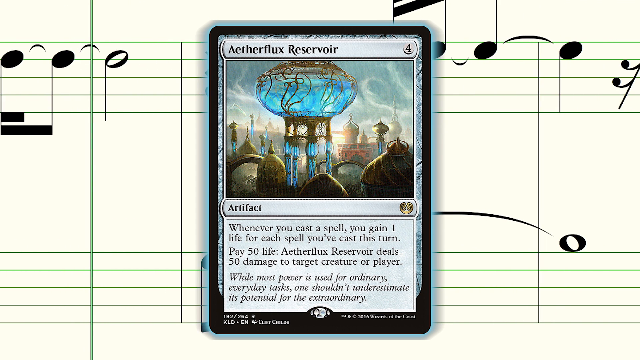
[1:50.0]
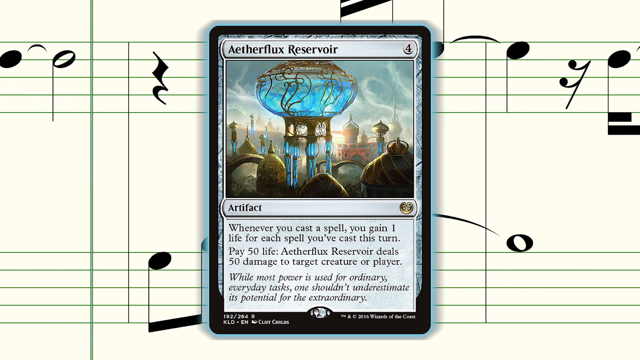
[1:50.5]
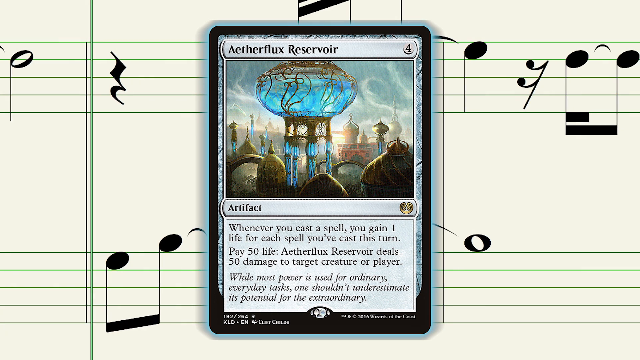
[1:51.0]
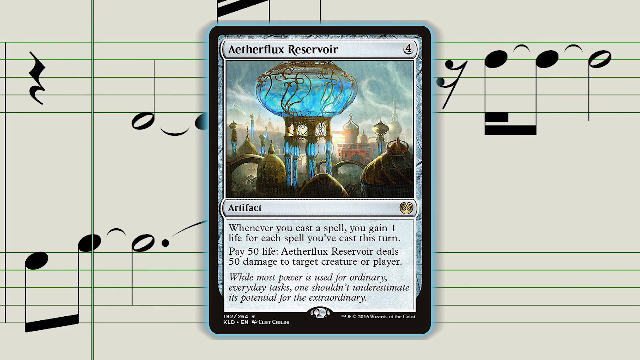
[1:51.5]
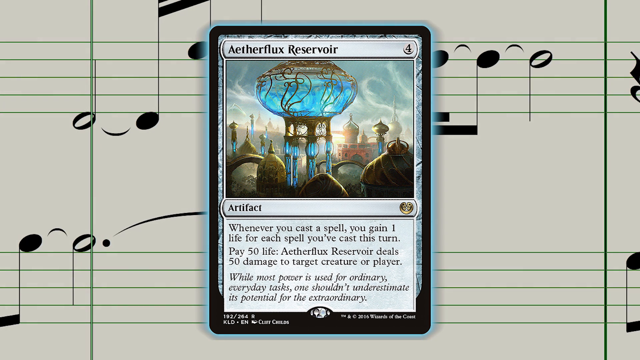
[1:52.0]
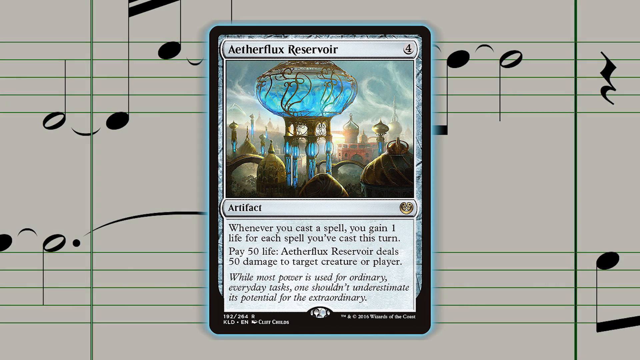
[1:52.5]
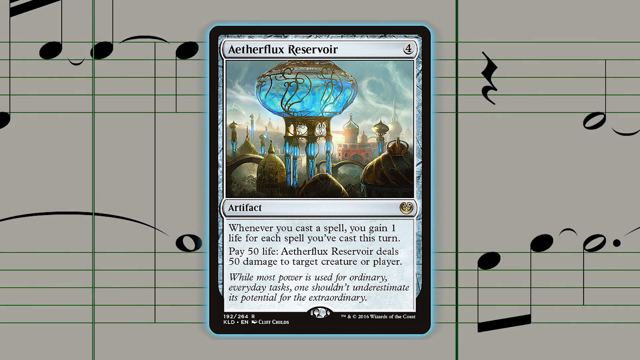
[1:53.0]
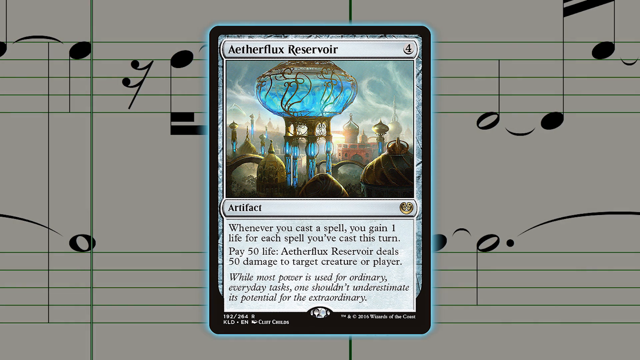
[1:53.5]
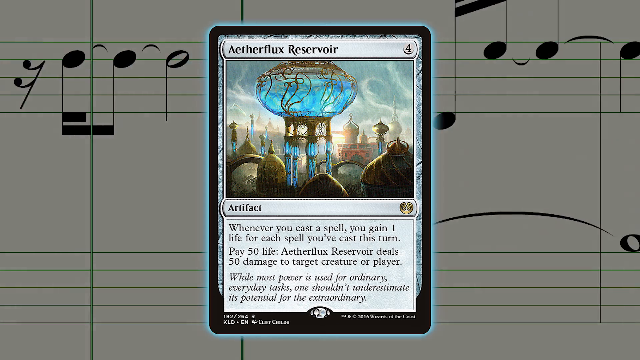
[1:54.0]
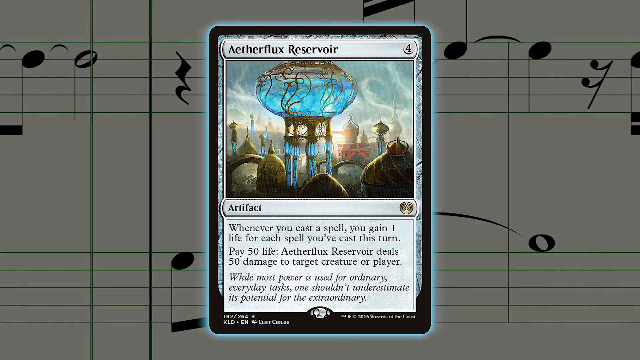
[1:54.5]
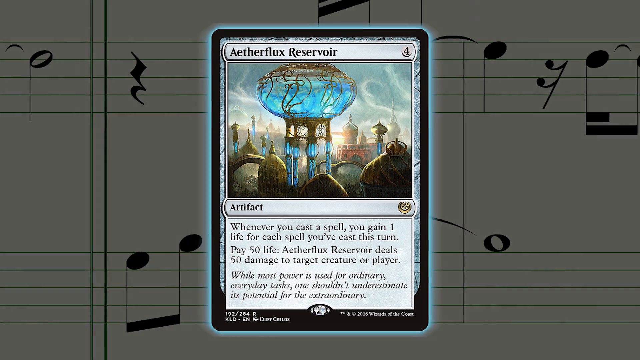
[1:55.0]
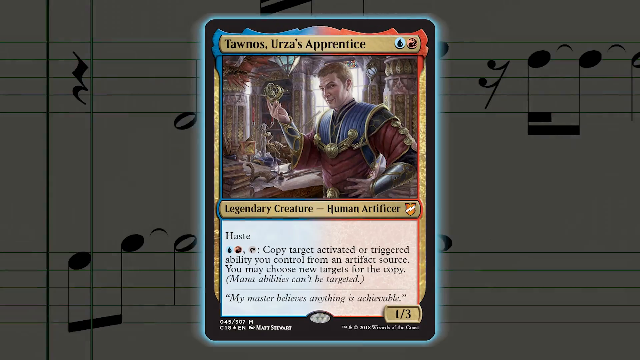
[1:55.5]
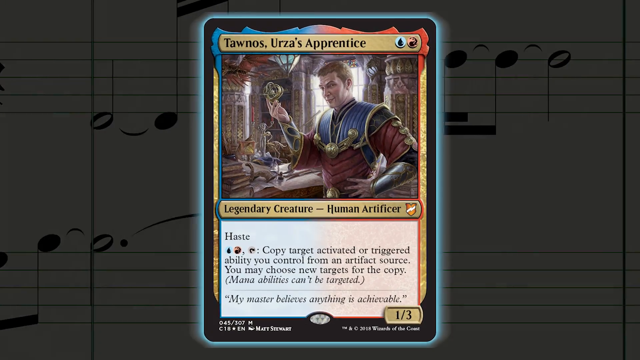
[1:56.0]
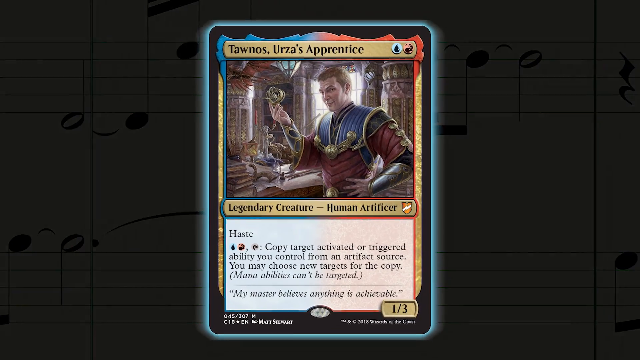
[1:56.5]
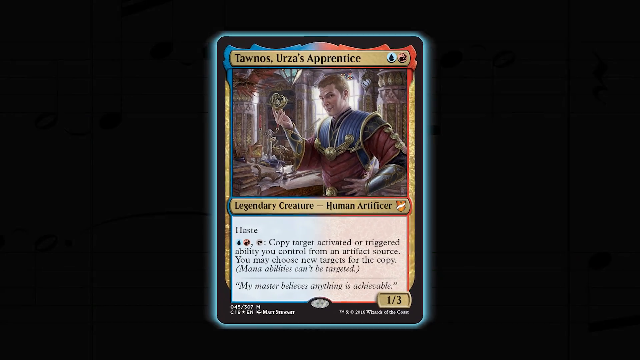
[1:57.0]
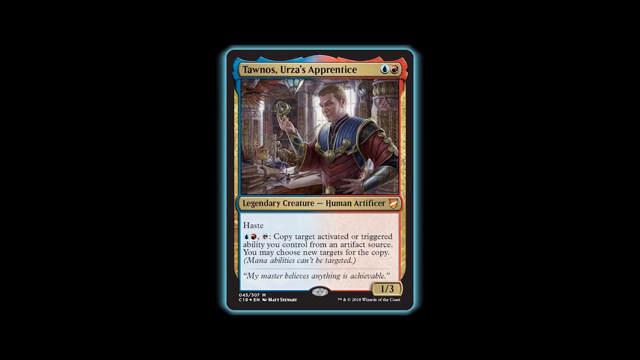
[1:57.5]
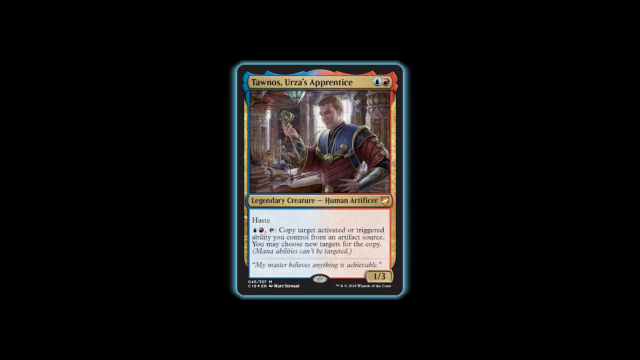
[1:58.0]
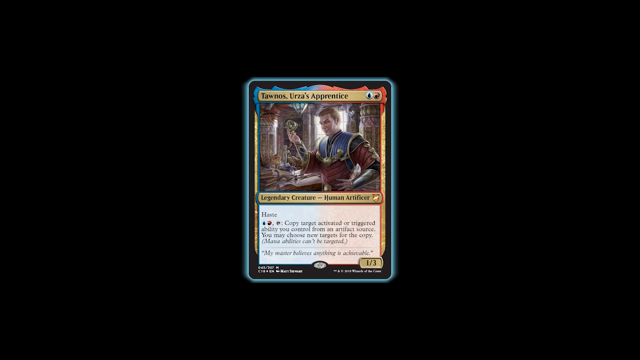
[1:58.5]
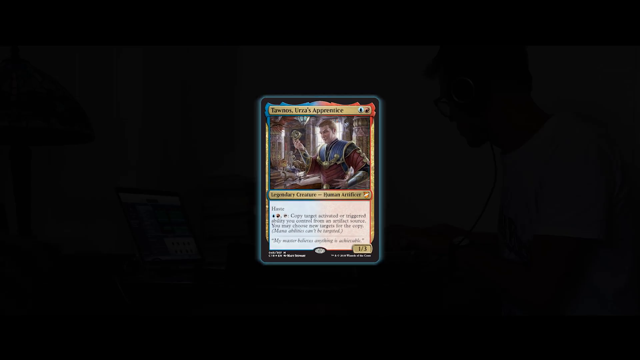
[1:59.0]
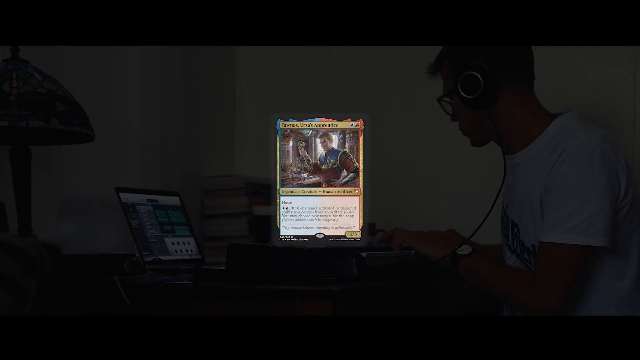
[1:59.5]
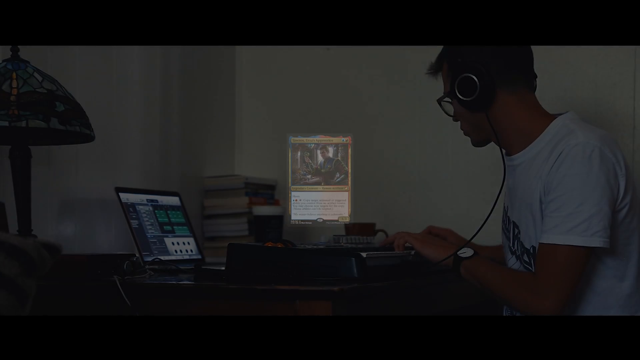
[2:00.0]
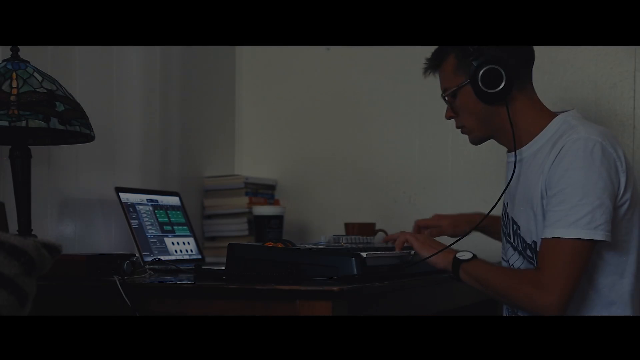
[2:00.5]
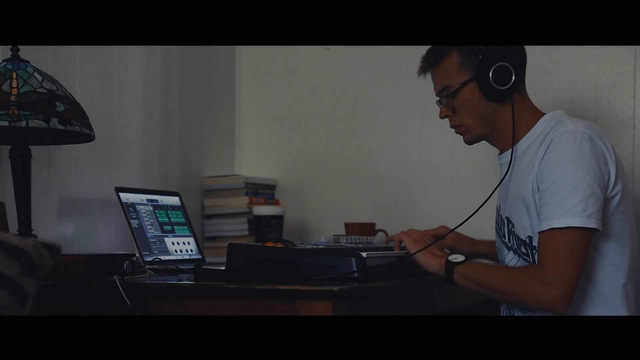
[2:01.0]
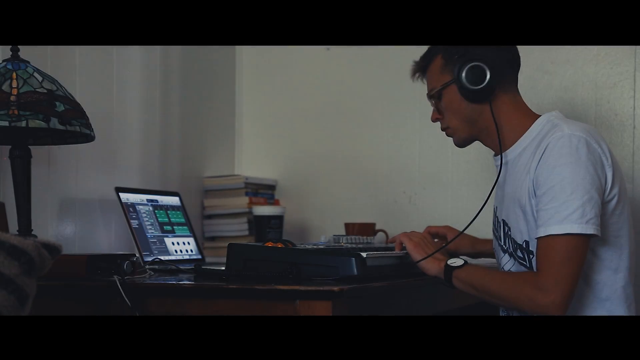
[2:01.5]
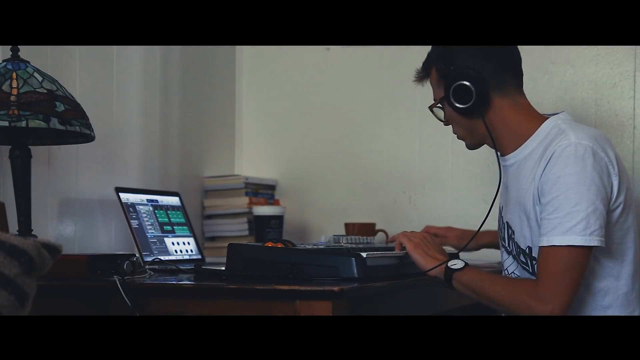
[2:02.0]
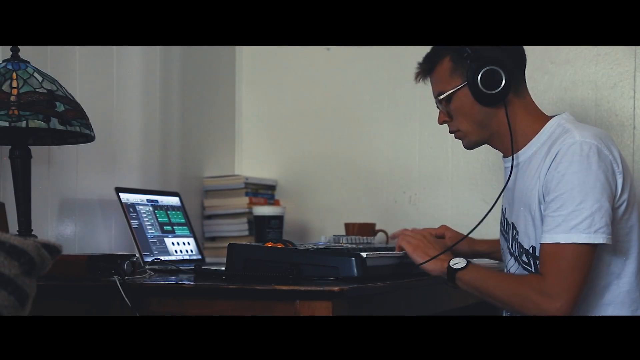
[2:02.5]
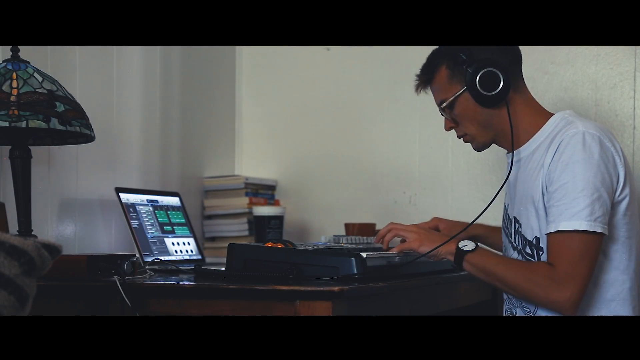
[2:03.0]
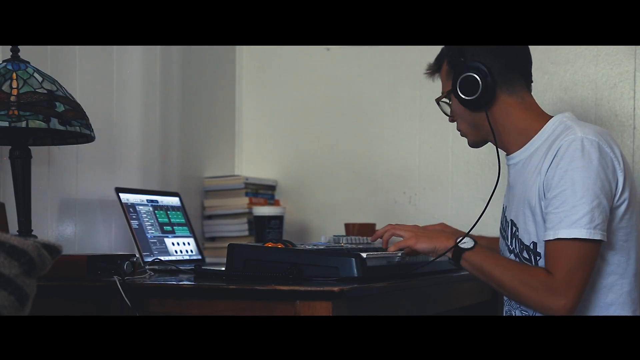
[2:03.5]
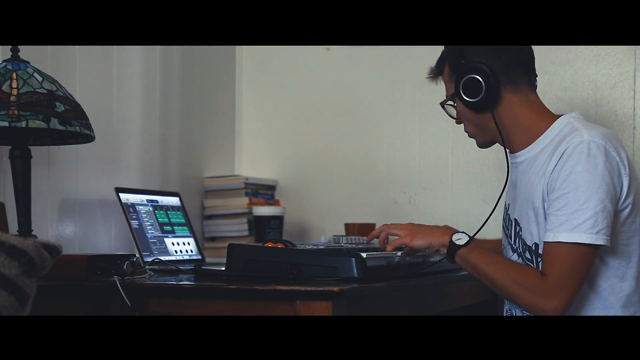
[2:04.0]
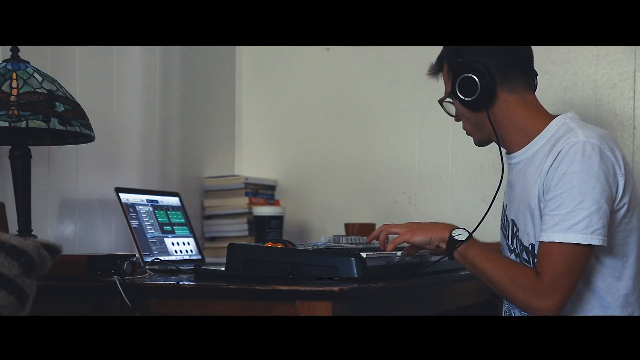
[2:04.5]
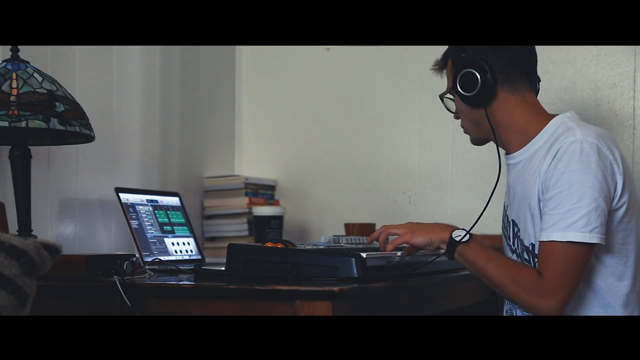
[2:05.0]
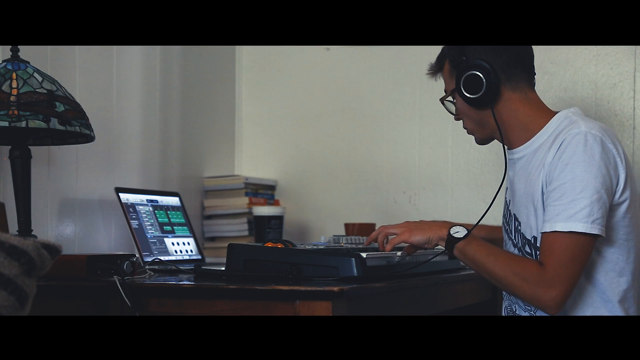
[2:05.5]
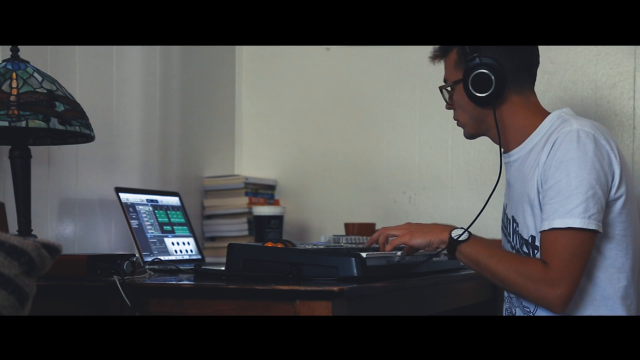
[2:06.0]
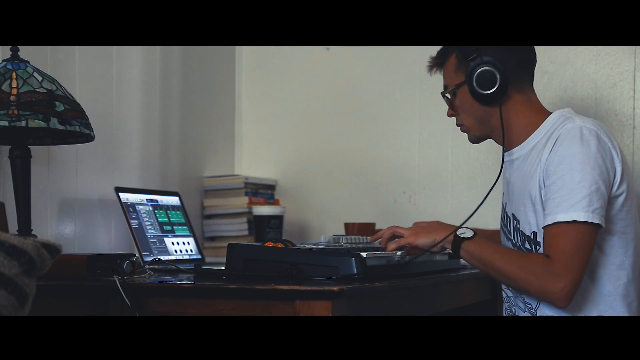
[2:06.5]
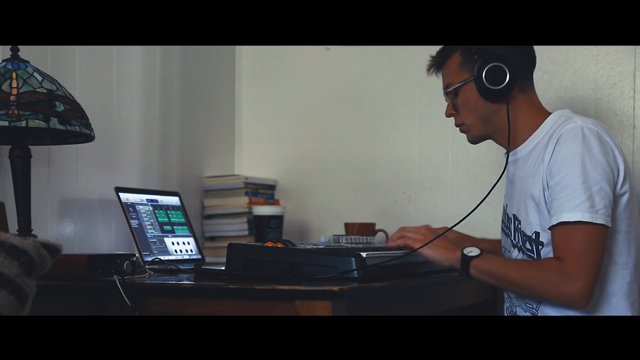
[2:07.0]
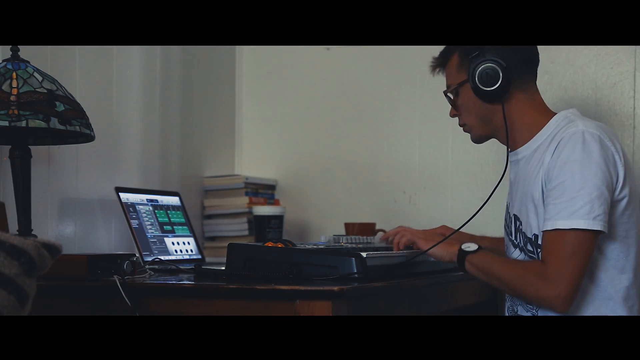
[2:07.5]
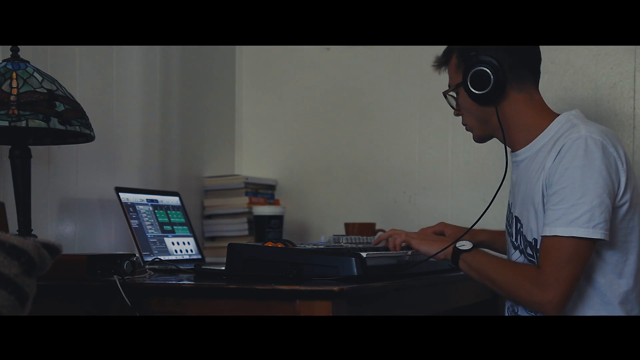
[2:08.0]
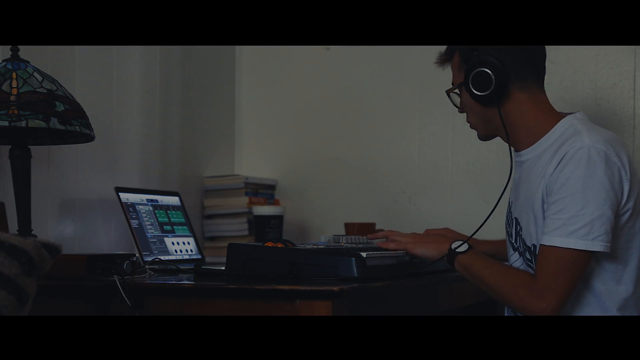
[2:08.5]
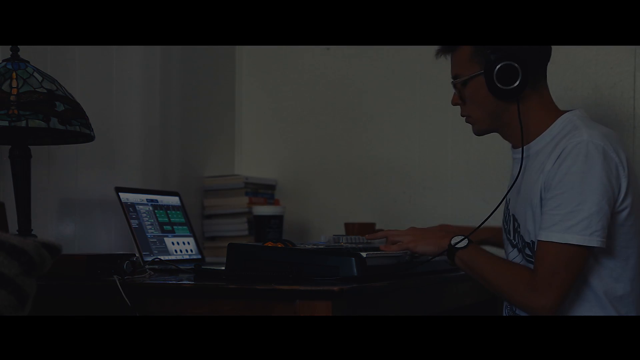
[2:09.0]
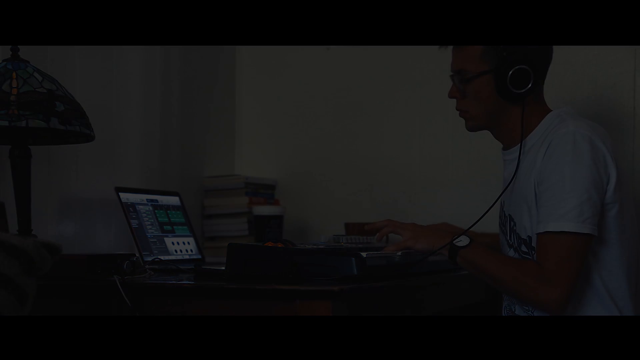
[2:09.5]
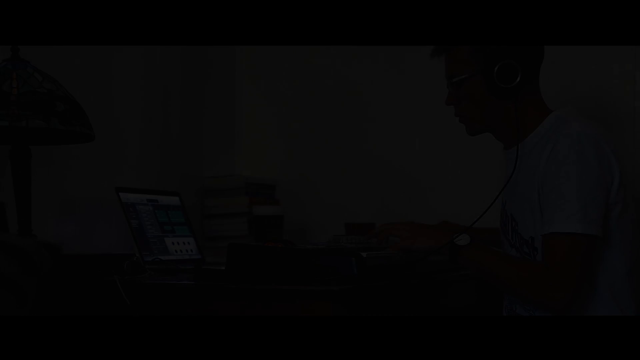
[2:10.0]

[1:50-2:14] The background notes fade to black, and the card in the middle changes back to the card with the man in blue and red armor, which shrinks into the center of the screen and grows more transparent until it disappears. A side-profile view then shows a man playing a keyboard, this time wearing his headphones. The shot is more zoomed out, revealing an open laptop further to the left of the keyboard. The setting is the corner of a room with white walls, the two sides meeting sort of between the laptop and the keyboard. At the far left of the screen is a lamp whose top has little mosaic-type patterns in red, green, blue, white and orange. The man plays the keyboard while slowly bobbing his head, and then the whole screen fades to black.